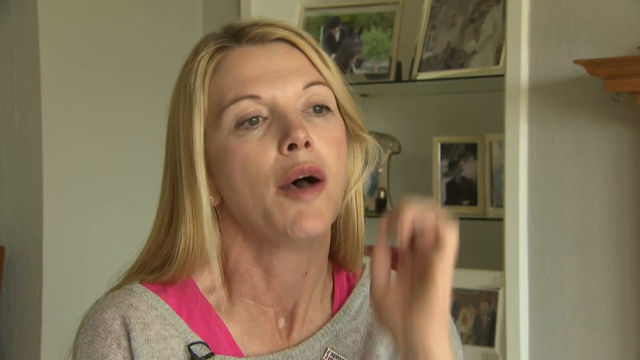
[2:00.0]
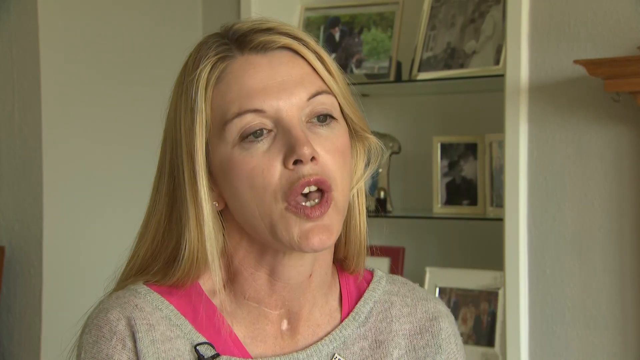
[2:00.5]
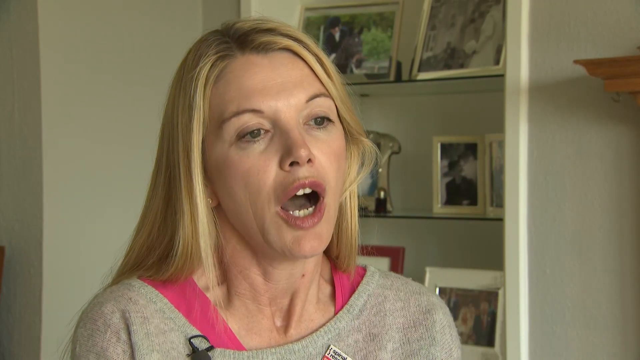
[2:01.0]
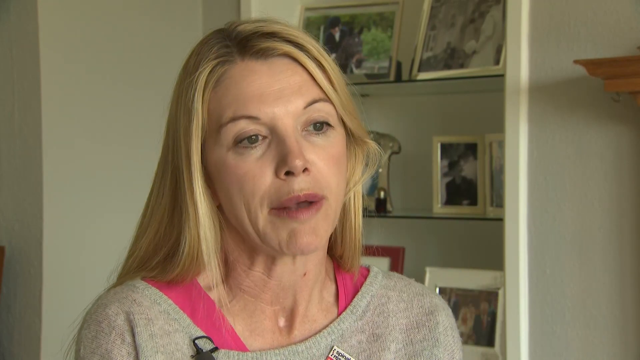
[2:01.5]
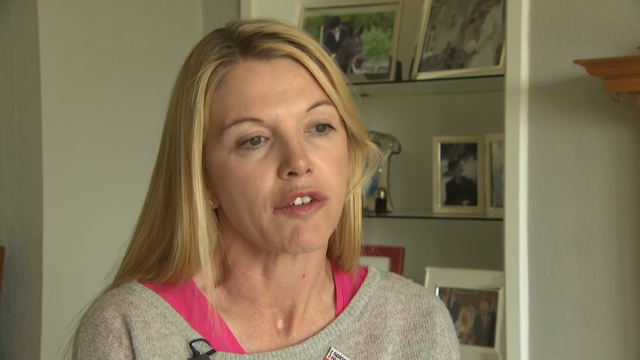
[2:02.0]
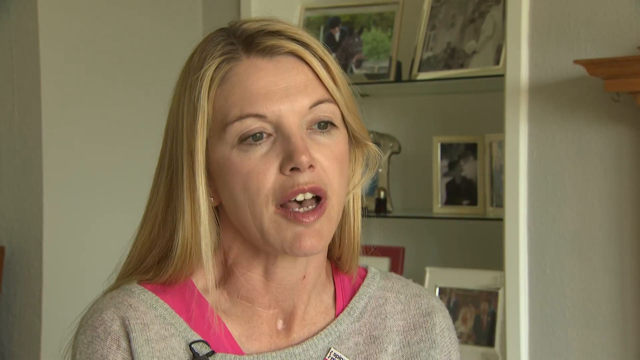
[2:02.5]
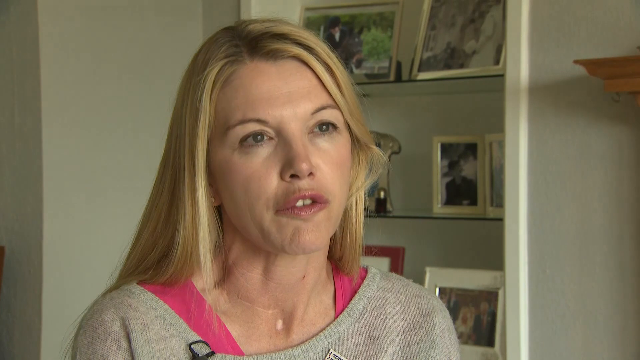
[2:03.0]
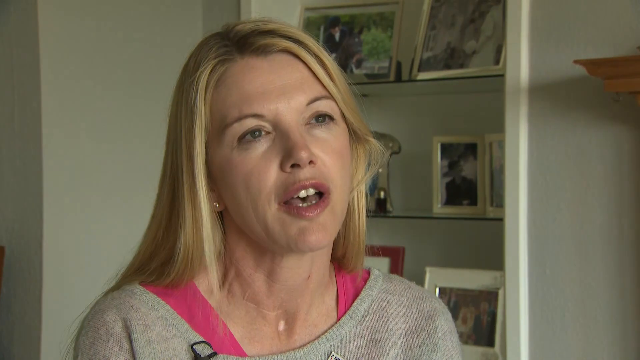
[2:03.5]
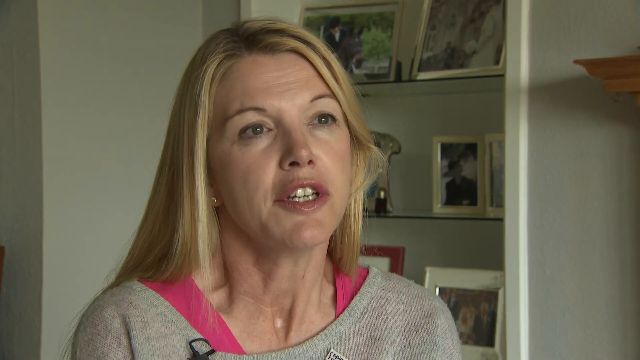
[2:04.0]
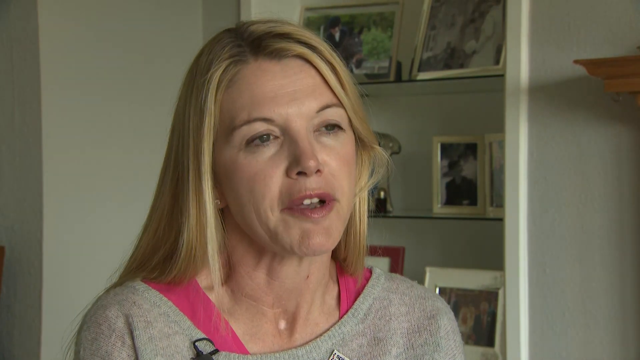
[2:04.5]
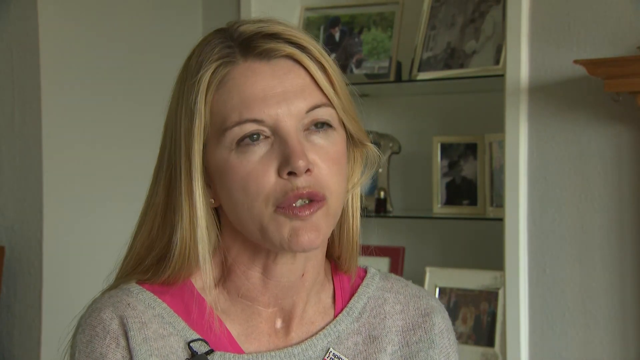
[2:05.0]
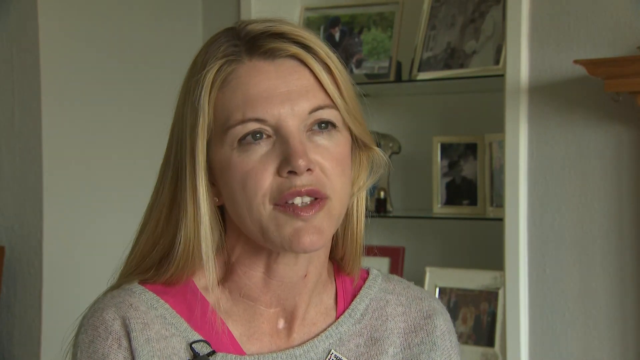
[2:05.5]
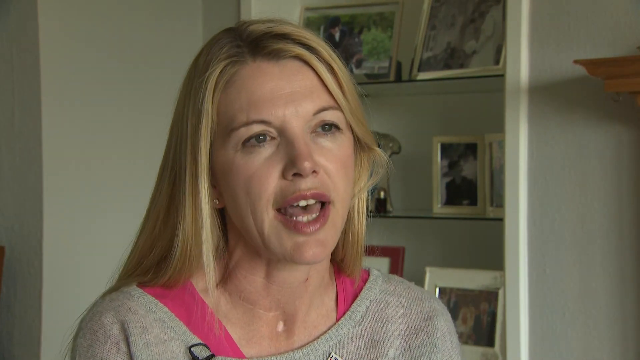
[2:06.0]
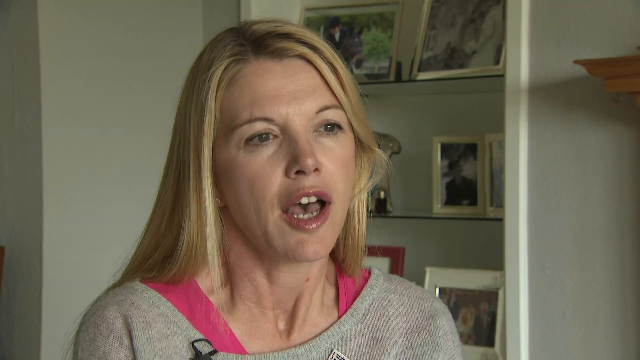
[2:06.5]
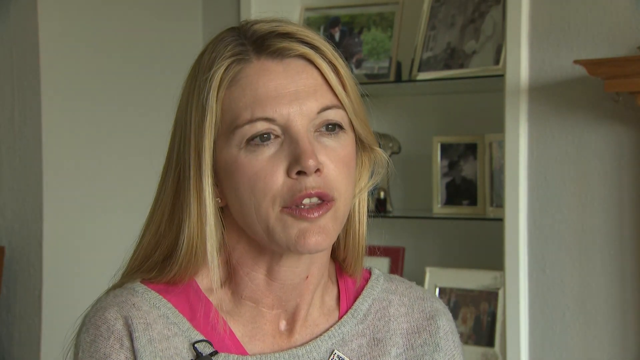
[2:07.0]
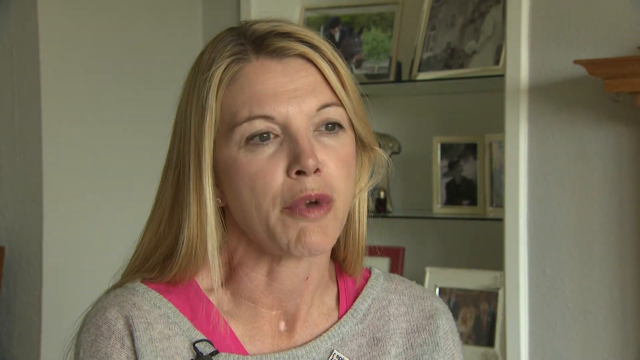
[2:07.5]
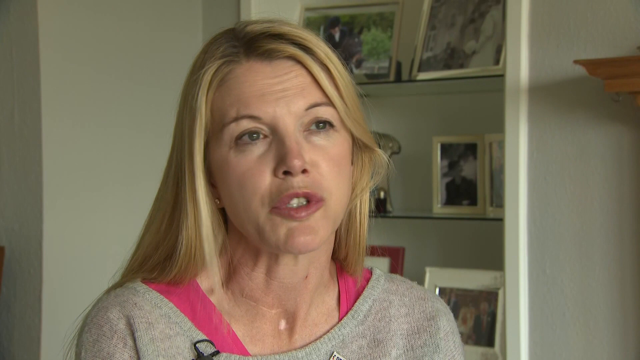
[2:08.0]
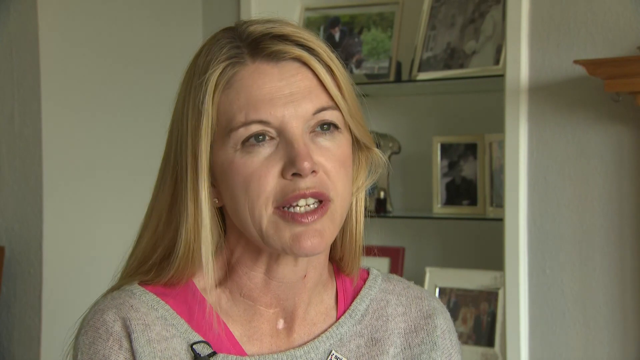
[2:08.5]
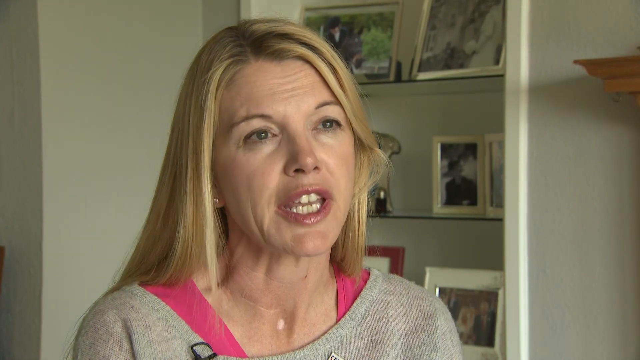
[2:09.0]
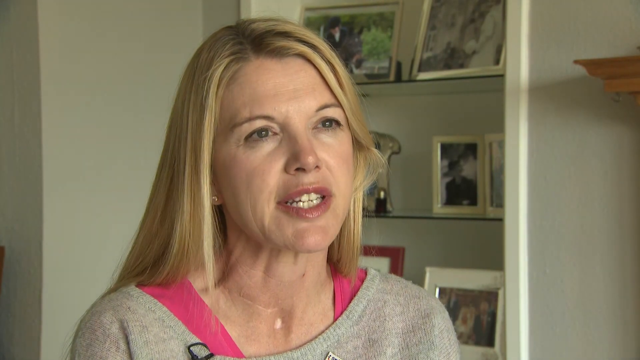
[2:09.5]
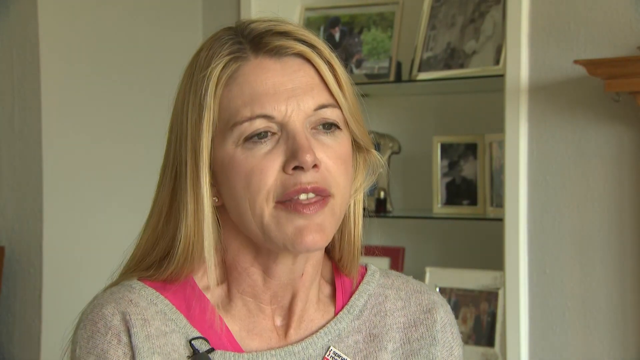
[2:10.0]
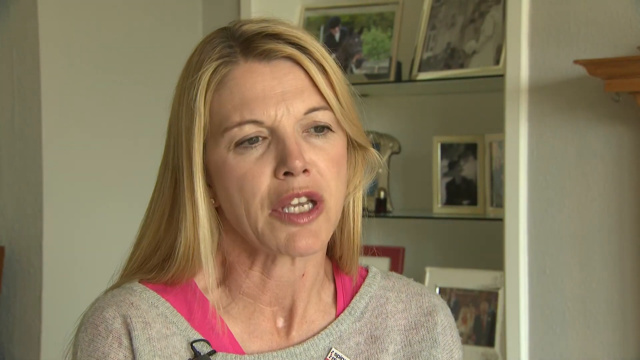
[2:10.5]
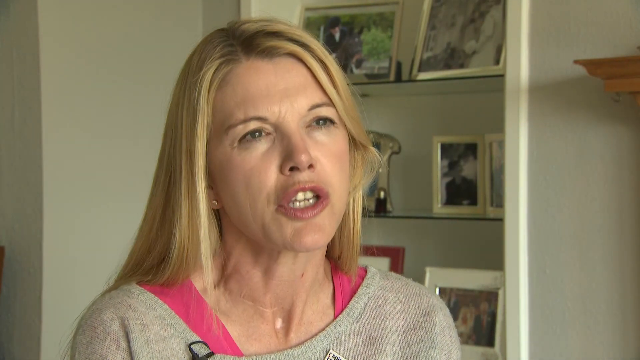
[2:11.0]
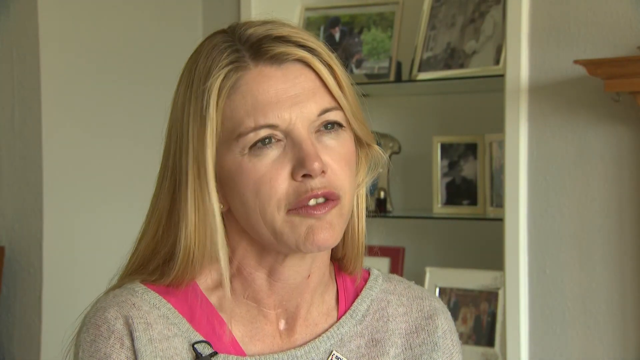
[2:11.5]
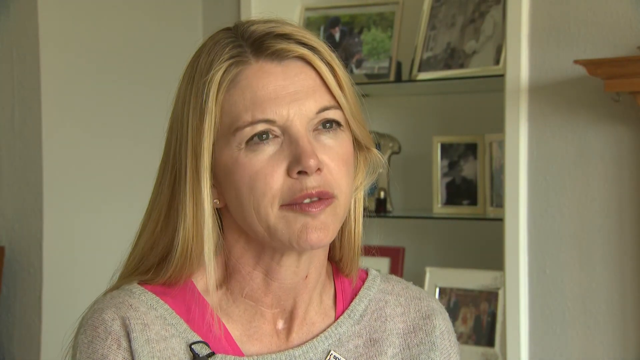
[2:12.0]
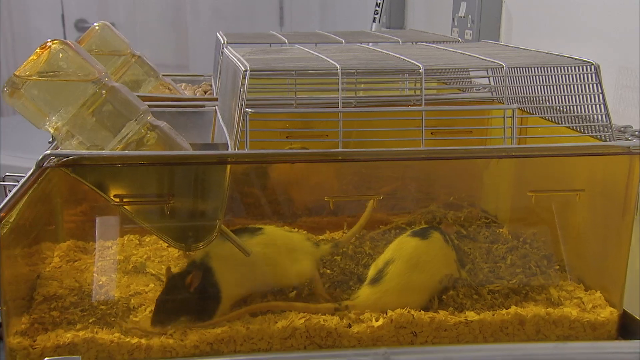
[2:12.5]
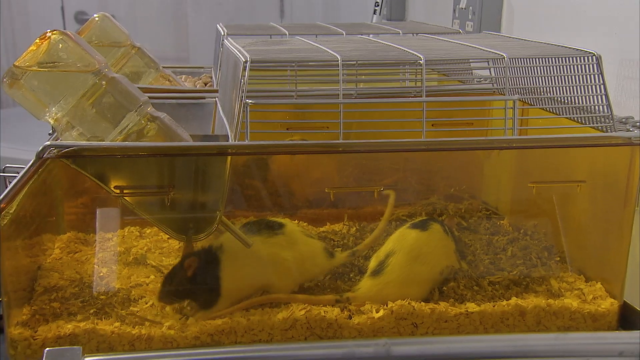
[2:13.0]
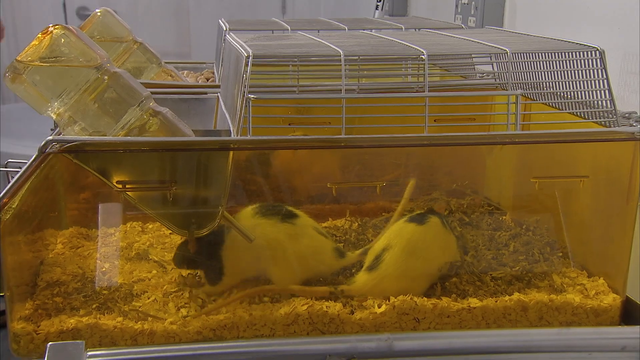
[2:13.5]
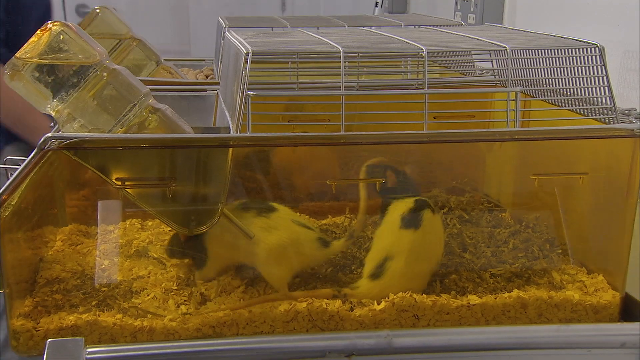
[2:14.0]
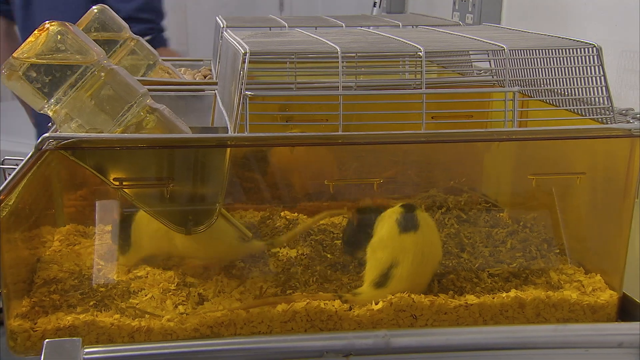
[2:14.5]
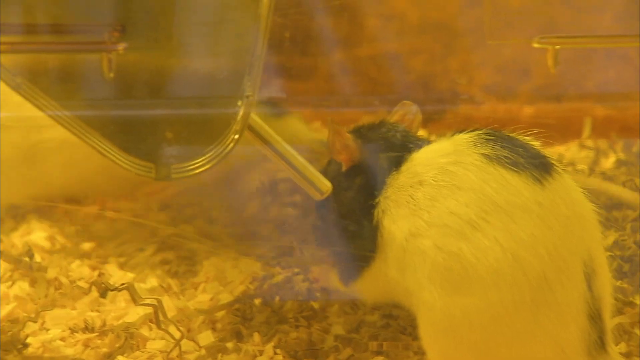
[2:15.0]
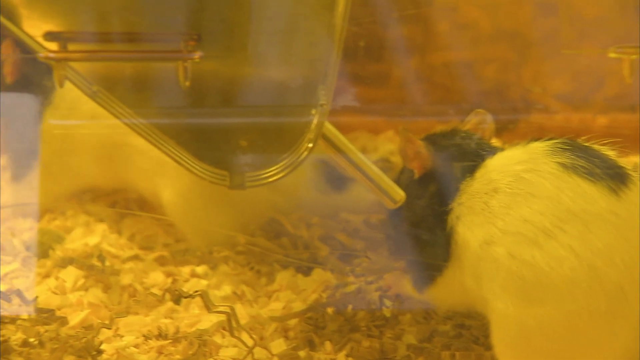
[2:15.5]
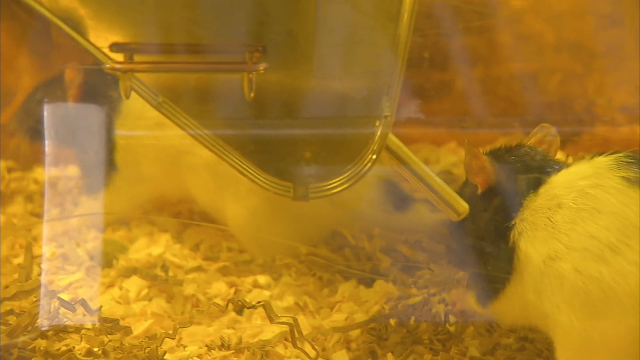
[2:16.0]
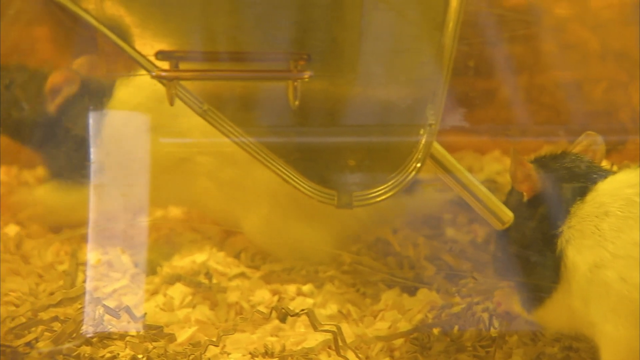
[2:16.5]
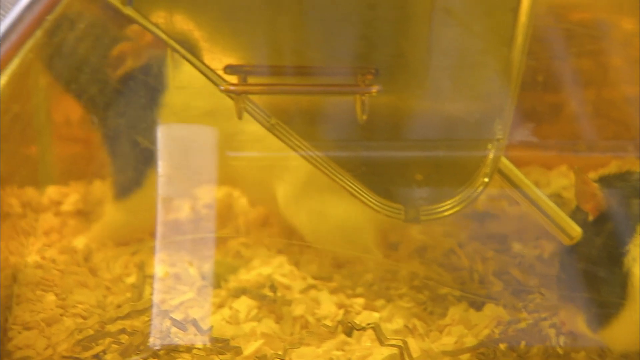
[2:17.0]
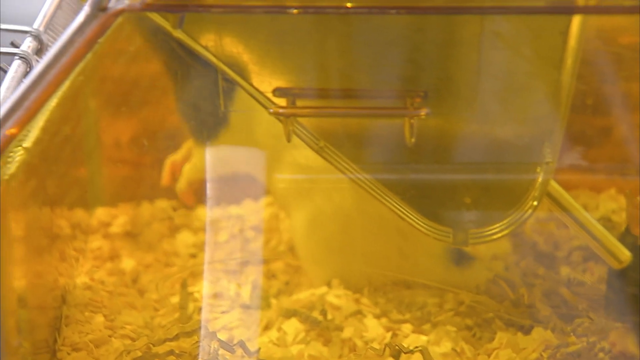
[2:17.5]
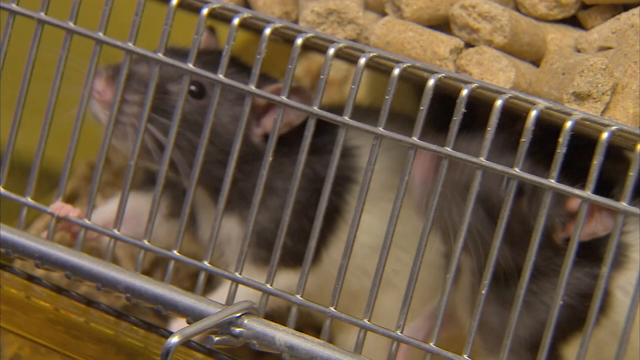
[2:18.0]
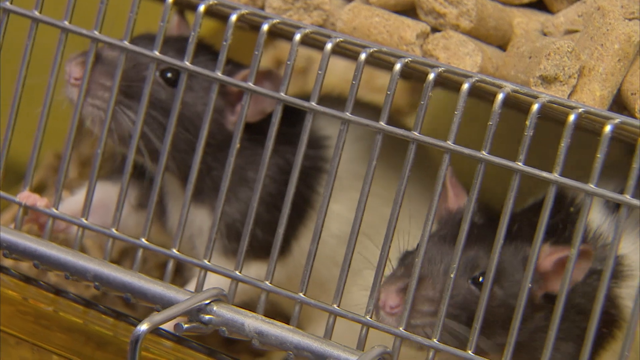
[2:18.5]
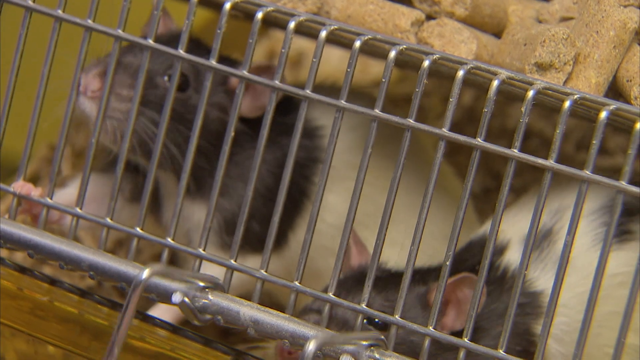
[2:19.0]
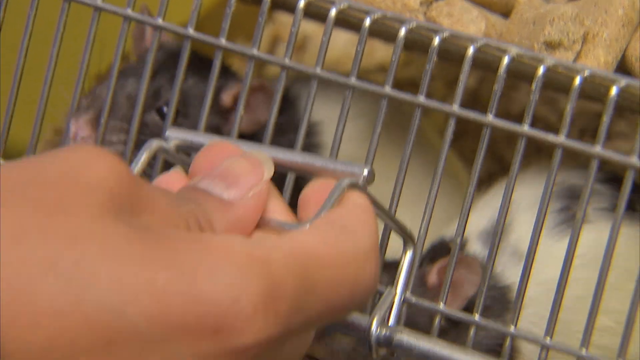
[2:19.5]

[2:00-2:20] The woman wears a grey sweater with a pink top underneath and has long blonde hair and what look like blue eyes. She is sitting in a room with white walls, with photos on a shelf behind her; one looks like a man in a flat cap, a couple are black and white, and some have red frames while others have white frames. The video cuts to rats in cages in what looks to be the same laboratory setting. The cages are see-through yellow plastic with a metal cage above parts of them, and there are two water bottles, one for each cage. Two cages are in the shot; one holds two rats, while the number of rats in the cage behind it is not visible.